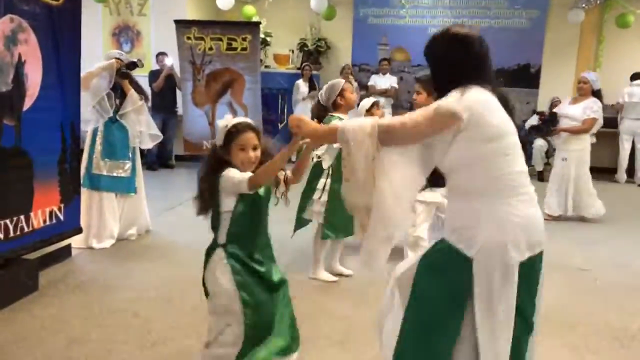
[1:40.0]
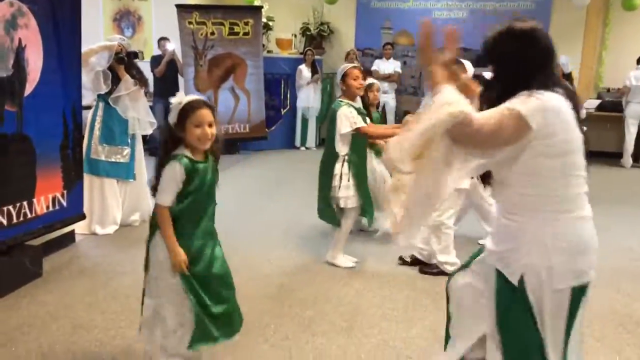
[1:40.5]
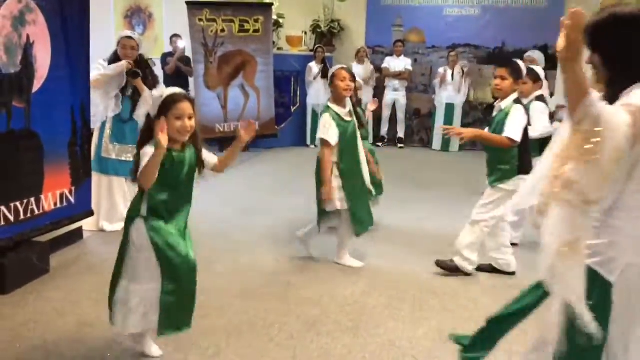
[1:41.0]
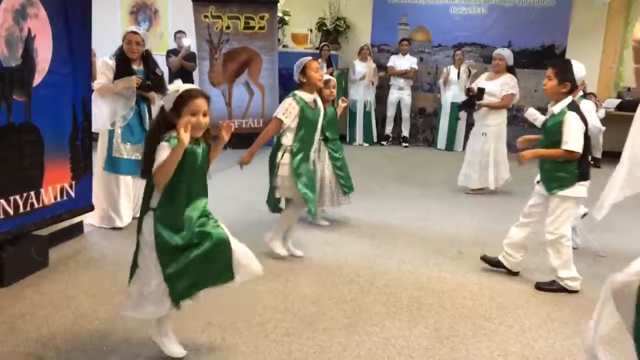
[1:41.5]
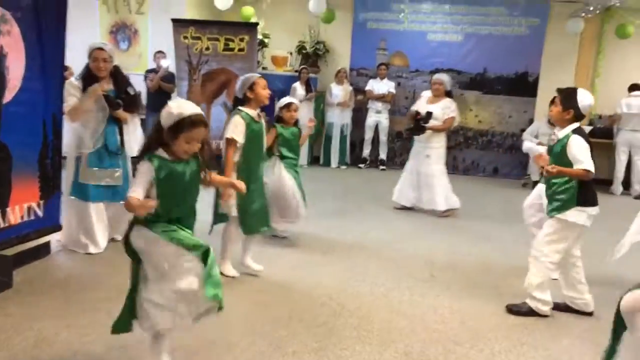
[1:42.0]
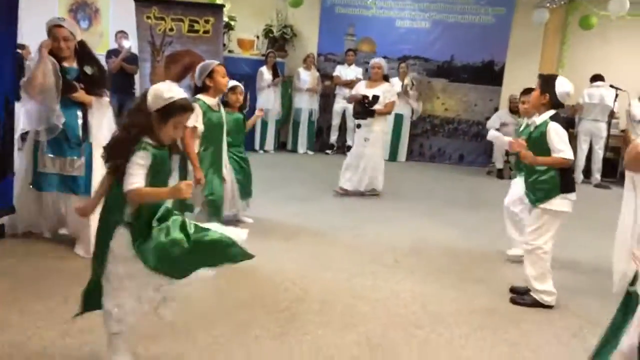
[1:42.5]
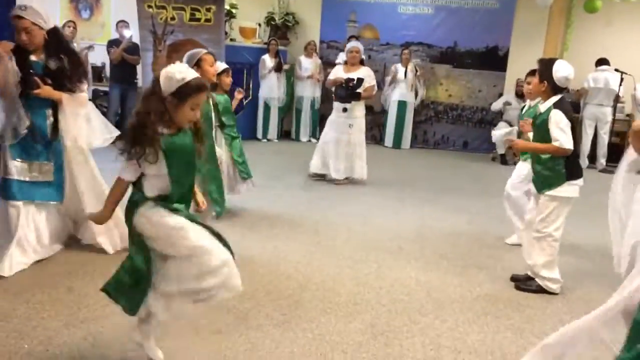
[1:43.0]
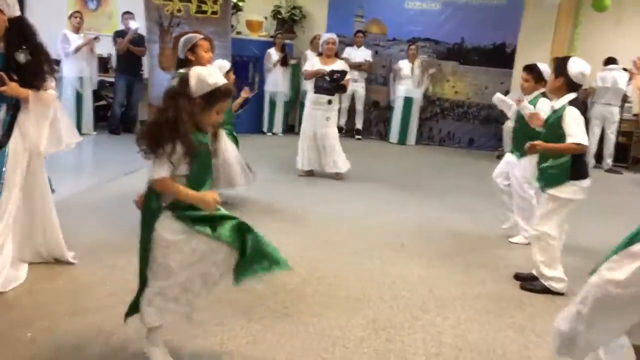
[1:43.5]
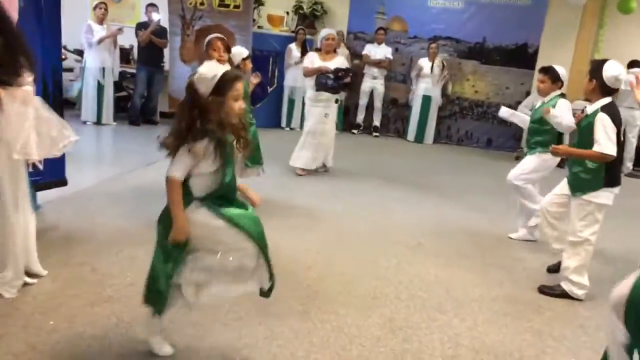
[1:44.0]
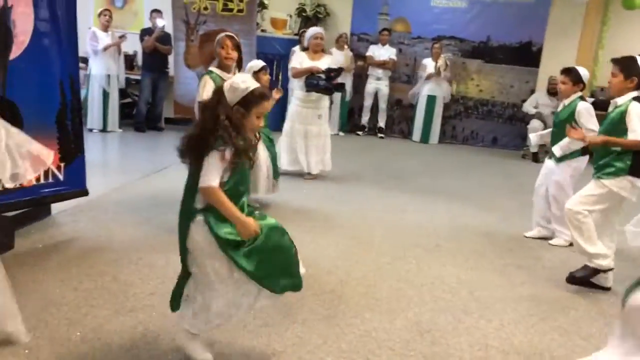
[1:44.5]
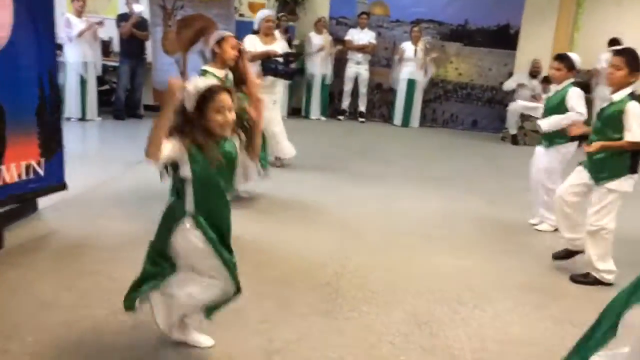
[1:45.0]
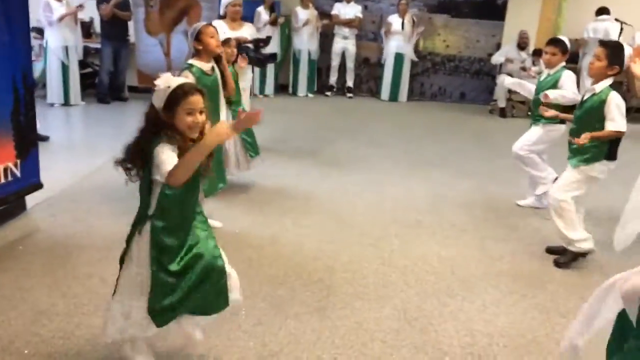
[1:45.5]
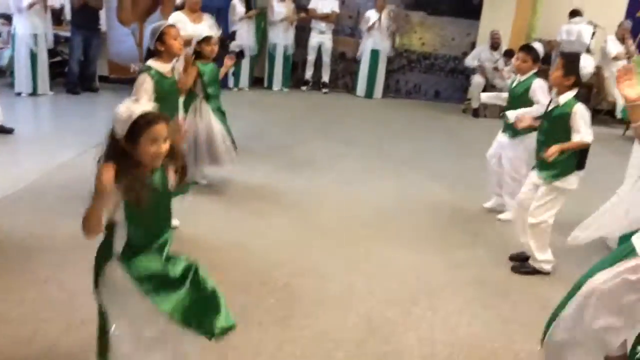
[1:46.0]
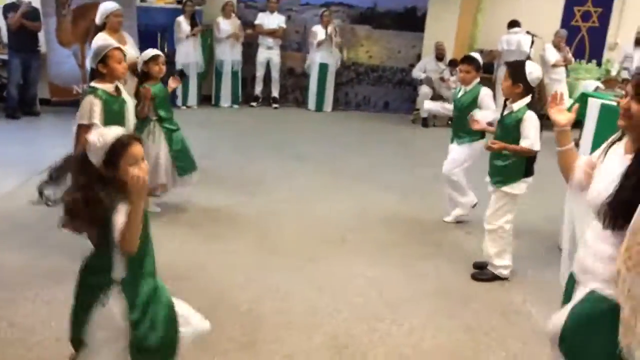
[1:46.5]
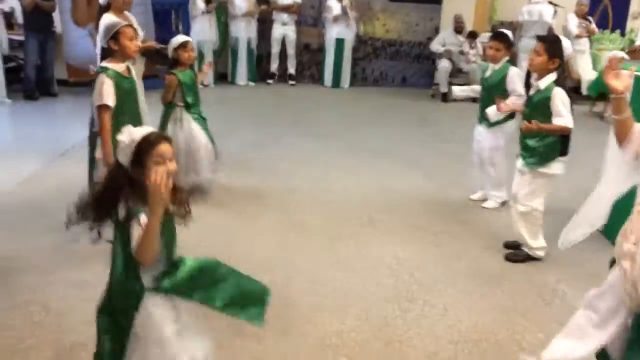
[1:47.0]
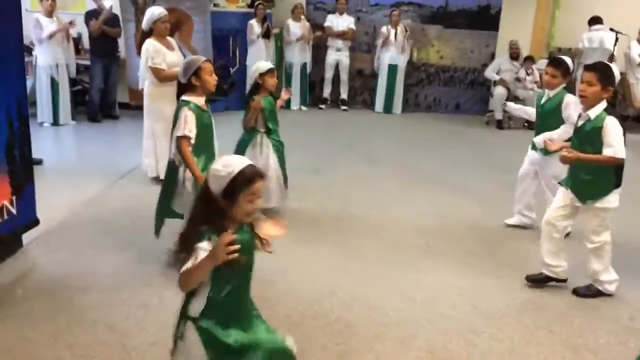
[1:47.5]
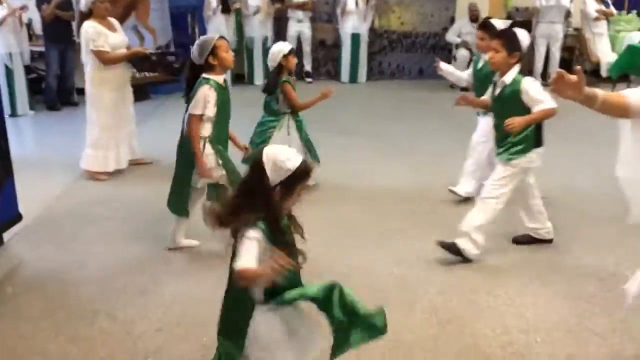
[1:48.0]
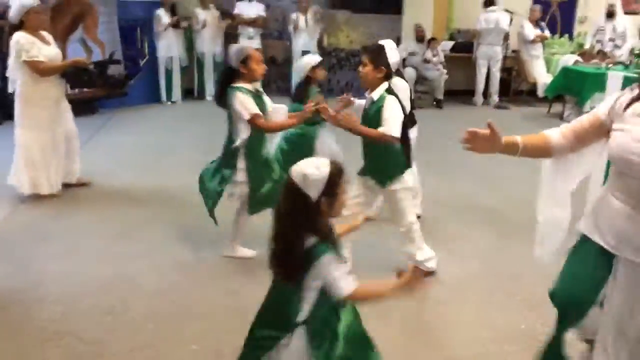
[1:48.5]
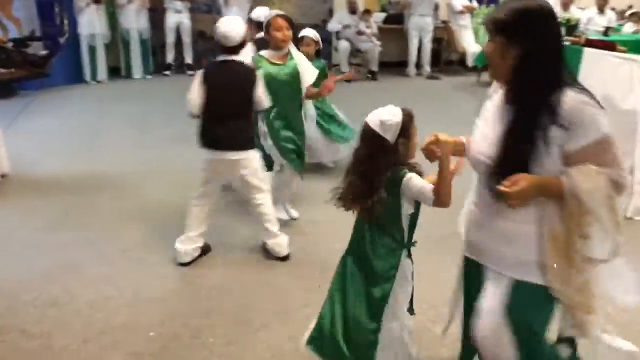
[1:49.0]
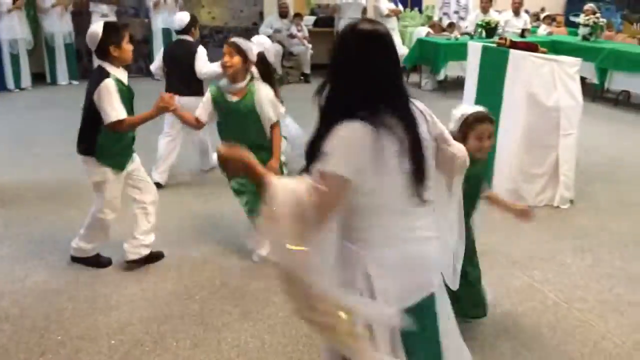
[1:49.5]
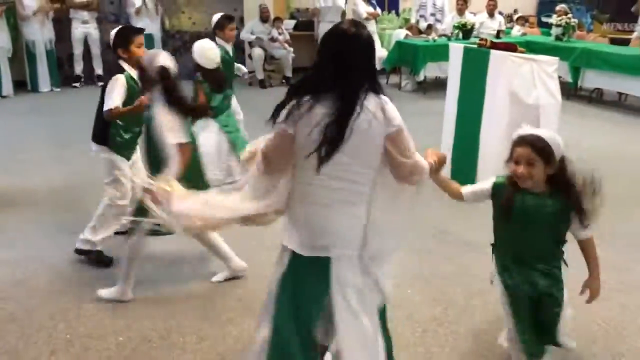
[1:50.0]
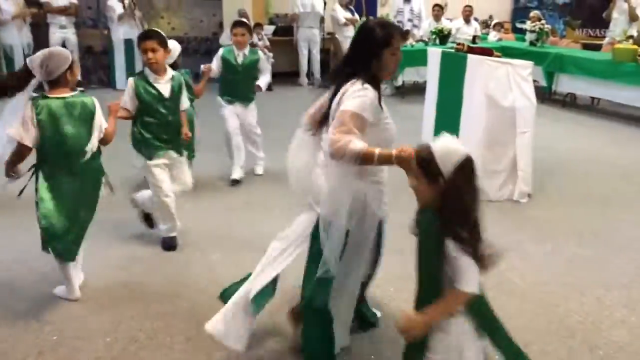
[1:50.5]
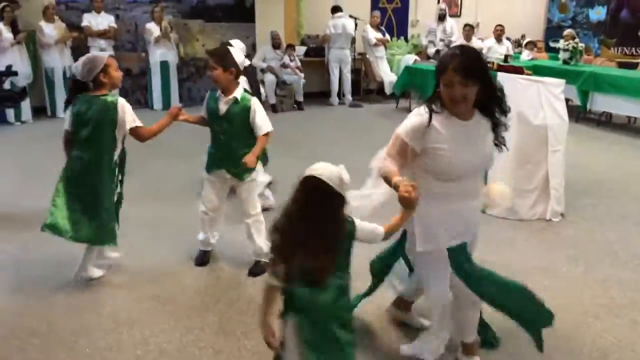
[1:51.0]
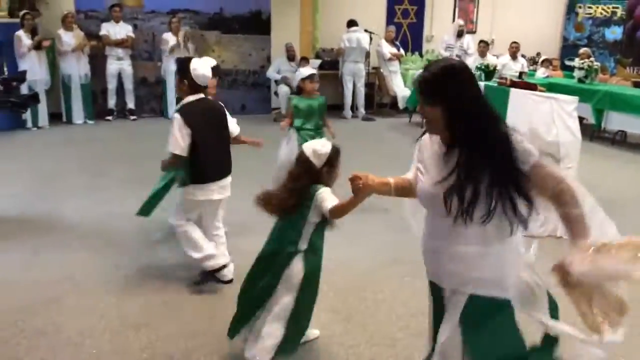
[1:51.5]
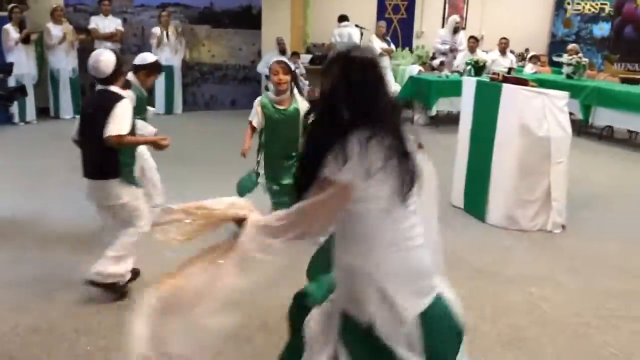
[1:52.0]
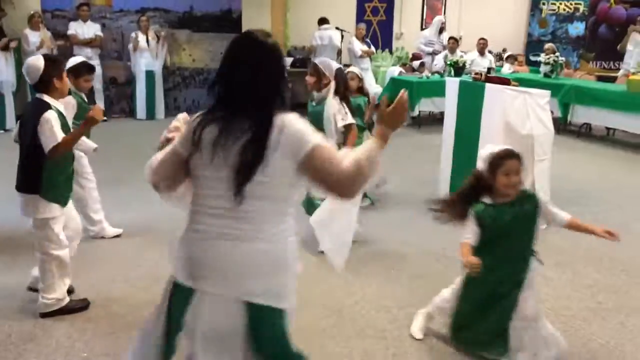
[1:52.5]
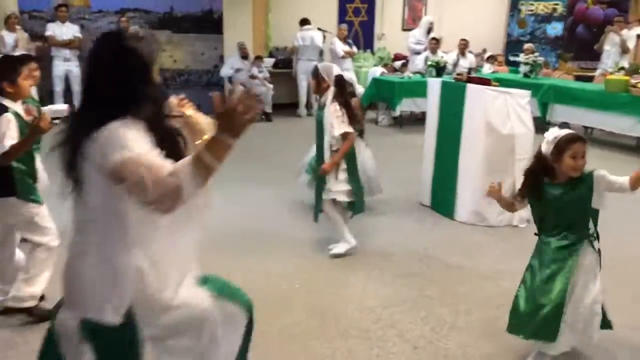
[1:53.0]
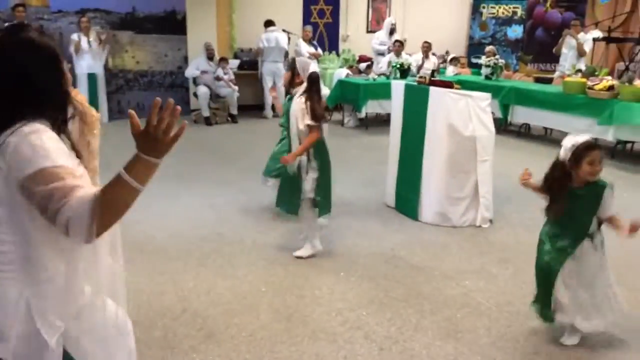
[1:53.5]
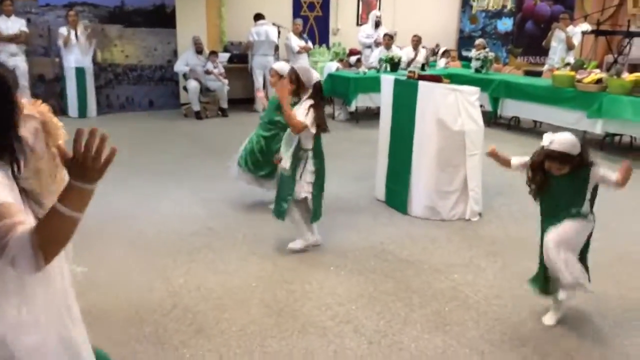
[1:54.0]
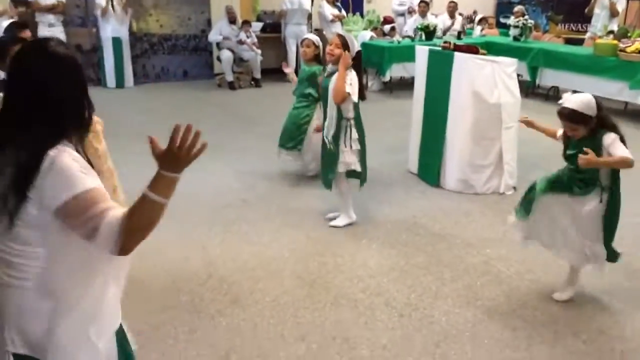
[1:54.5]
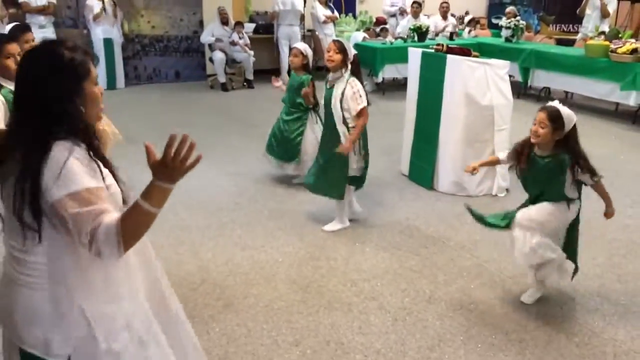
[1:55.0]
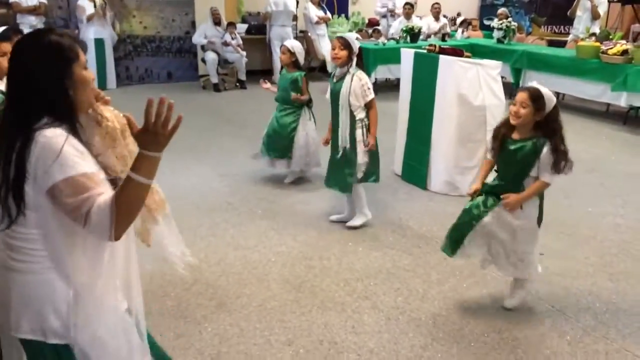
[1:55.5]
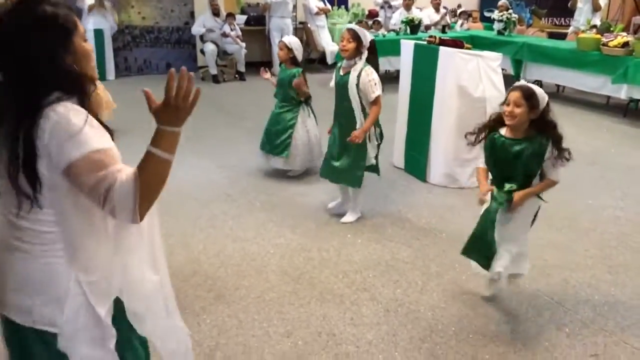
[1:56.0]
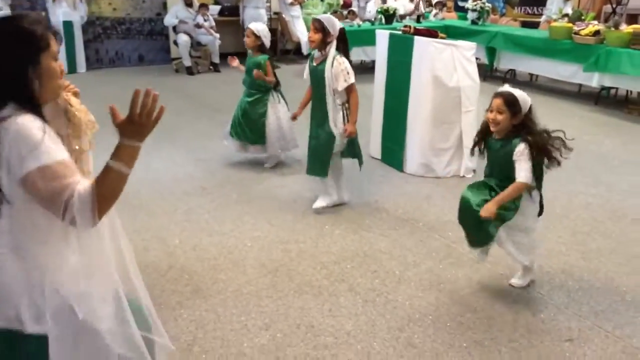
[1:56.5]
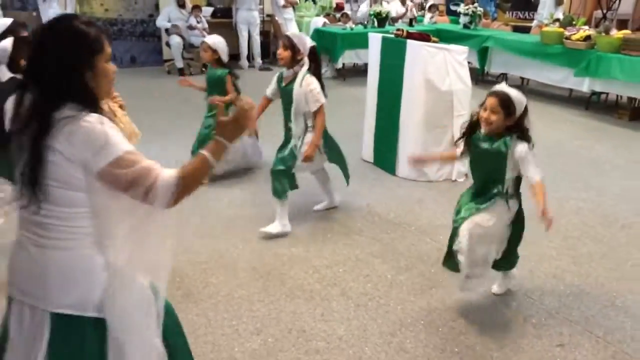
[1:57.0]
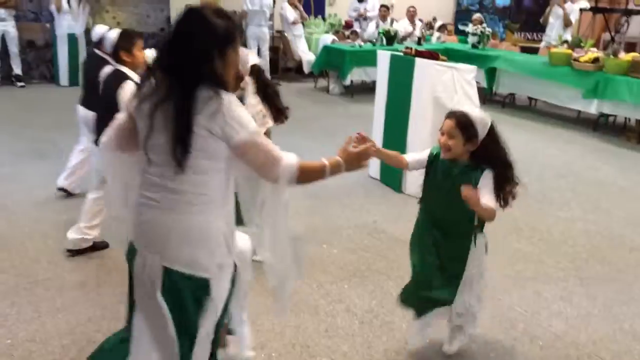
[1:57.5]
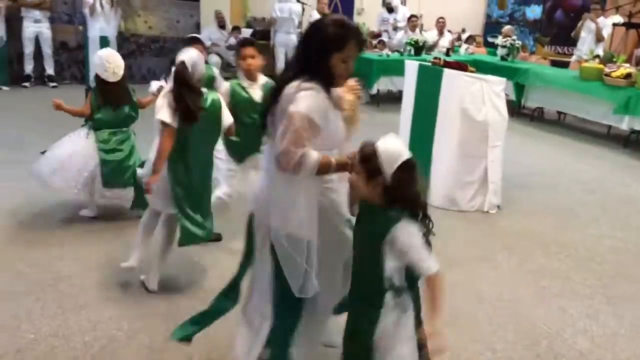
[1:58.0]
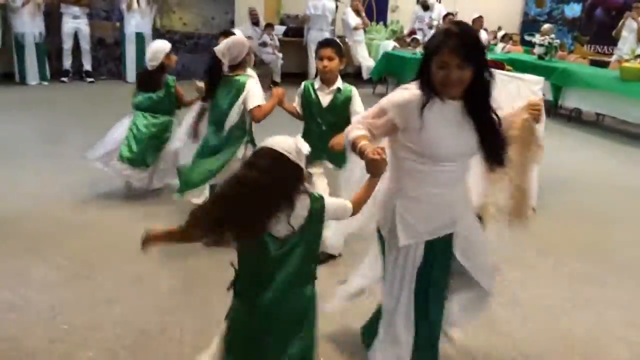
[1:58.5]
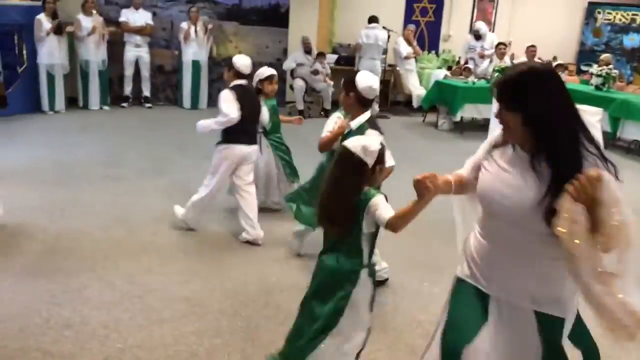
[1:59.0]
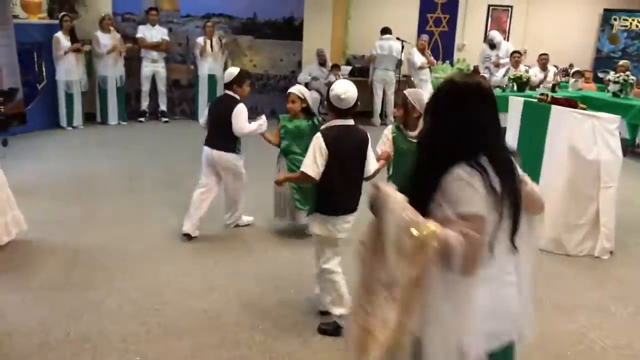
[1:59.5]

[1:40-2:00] The children are having fun, holding hands and dancing. The girl who has an adult as her partner is very happy. They spin around. It looks like a ceremony, and adults are clapping as they watch. There is a poster with what looks like "DL" on it. The performers skip in place, then swing around, holding hands and dancing.